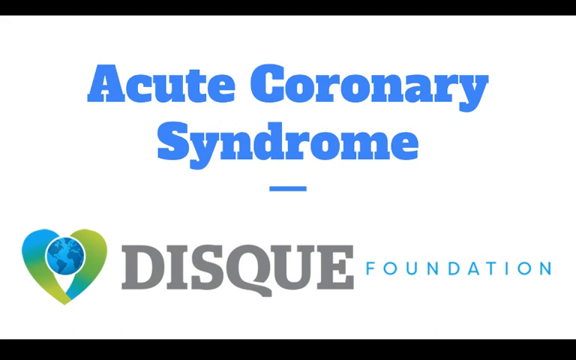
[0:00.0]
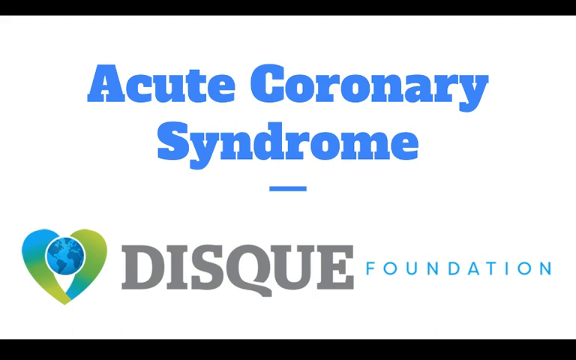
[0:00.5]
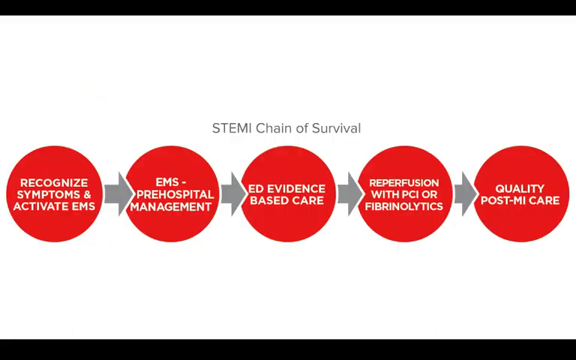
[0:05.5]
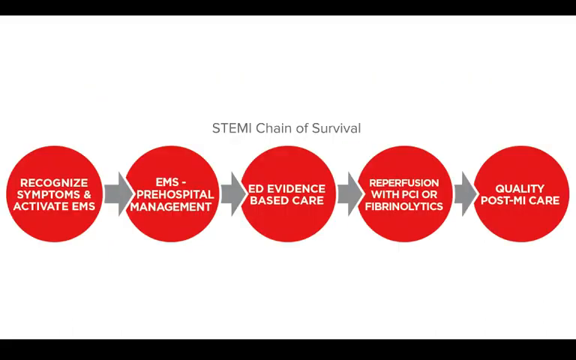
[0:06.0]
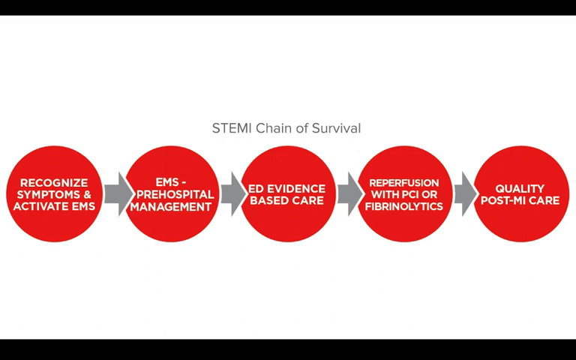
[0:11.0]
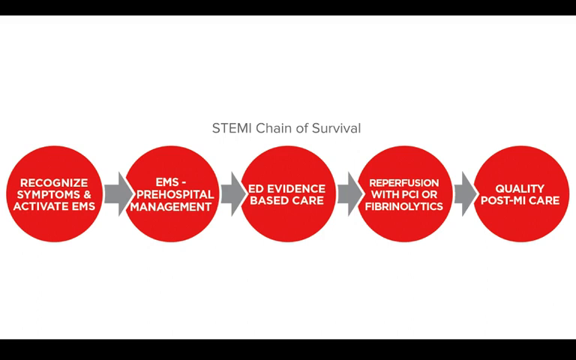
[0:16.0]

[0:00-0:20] The video opens on the title "Acute Coronary Syndrome" in a bright sky blue, centered on the screen, with "acute coronary" on top and "syndrome" below it. A straight horizontal line runs across the very middle of the screen, mainly under the D, the R and the word "syndrome". At the bottom is "DISQUE FOUNDATION" in all caps: "DISQUE" is in very large gray type and "FOUNDATION" is a bit smaller, in a blue that looks very similar to the blue above, maybe a little lighter. To the left of "DISQUE" is a heart icon whose pieces are connected with what looks like an earth at the top; the earth's sea is blue and the continents look dark blue-gray. The heart has the same sky blue on the upper left and lower right, and elsewhere a green that kind of fades into greenish yellow. The heart is enclosed, but its center below the earth, toward the bottom, is open and not colored in. Another screen has the gray title "STEMI chain of survival", with five red dots across the center of the screen connected by four gray arrows. Each dot contains white text: the first, on the left, says "recognize symptoms and activate EMS"; the next says "EMS pre-hospital management"; the one in the middle says "ED evidence-based care"; the fourth says "reperfusion with PCI fibrinolytics"; and the last says "quality post-MI care". The background is white at the top and kind of fades into gray toward the bottom, and this same background is used throughout the whole video.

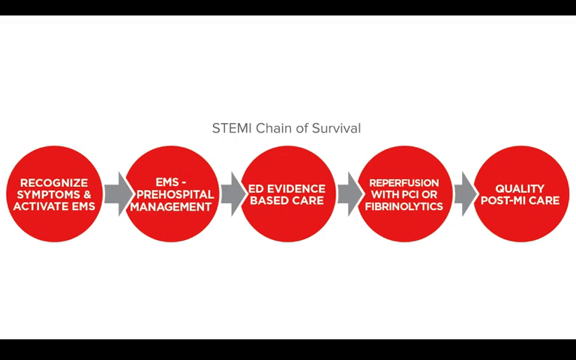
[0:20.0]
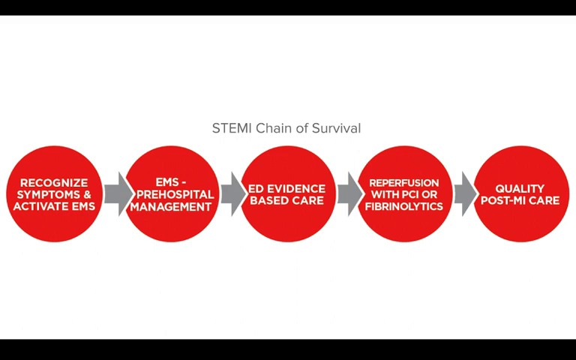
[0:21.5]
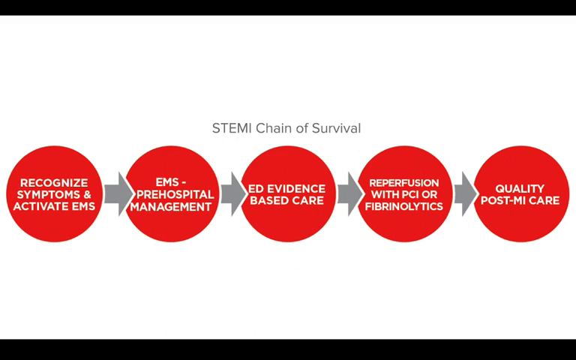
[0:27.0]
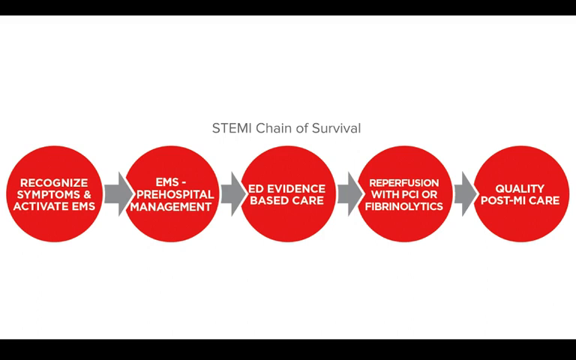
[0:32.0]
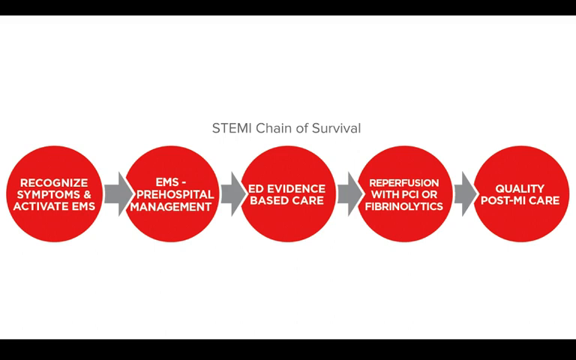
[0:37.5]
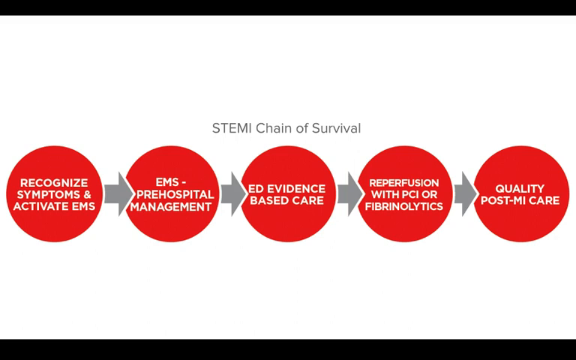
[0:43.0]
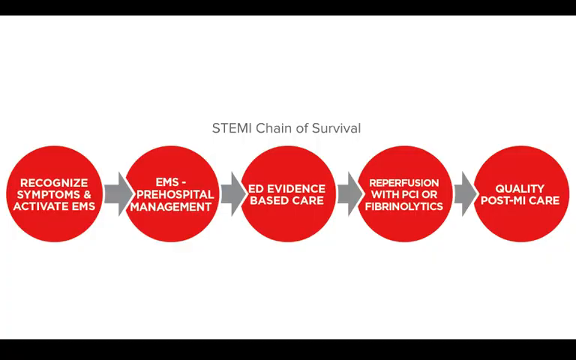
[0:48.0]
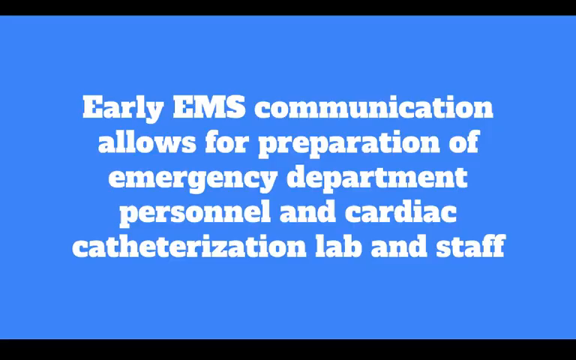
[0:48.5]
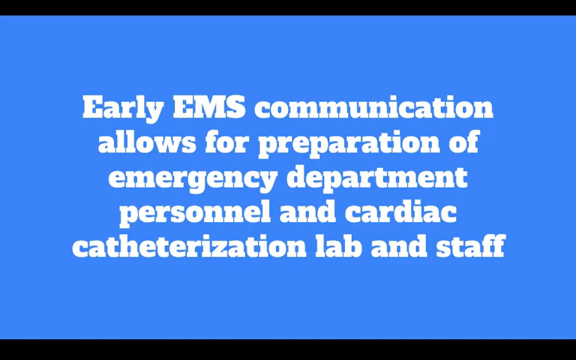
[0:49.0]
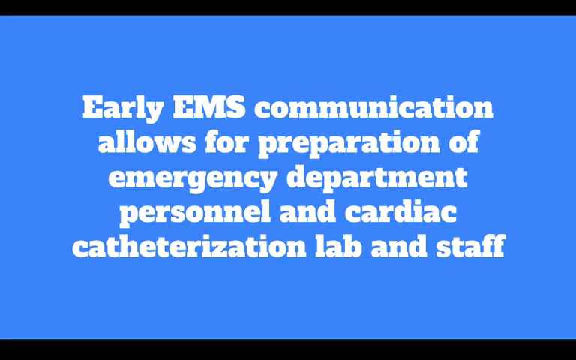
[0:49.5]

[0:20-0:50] The screen has a gradient background, white at the top fading into dark gray at the bottom, with most of it white. Centered in the upper middle is the title "STEMI chain of survival" in gray, with "STEMI" in all caps. Five red dots run horizontally across the center of the screen, each containing white all-caps text, and four gray arrows show the progression from the first dot to the last. The first dot, on the left, says "recognize symptoms and activate EMS"; the second says "EMS pre-hospital management"; the third, centered on the screen, says "ED evidence-based care"; the fourth says "reperfusion with PCI or fibrinolytics"; and the fifth says "quality post-MI care".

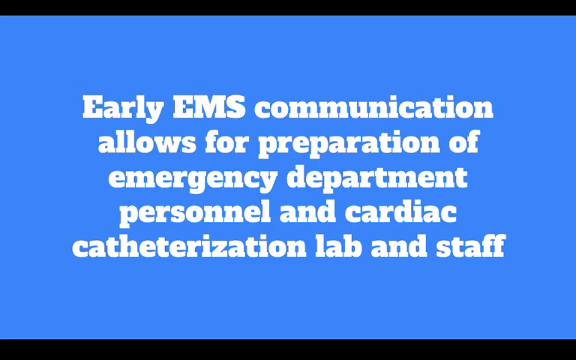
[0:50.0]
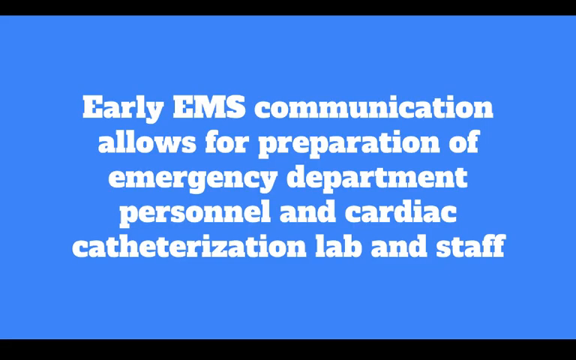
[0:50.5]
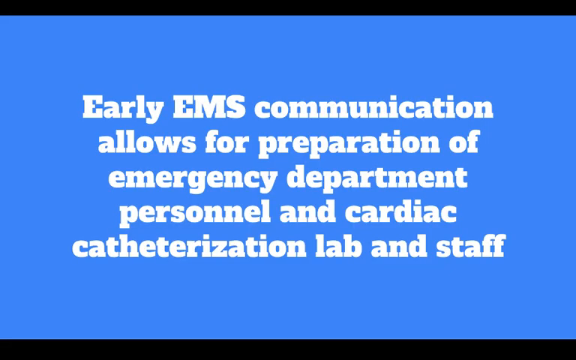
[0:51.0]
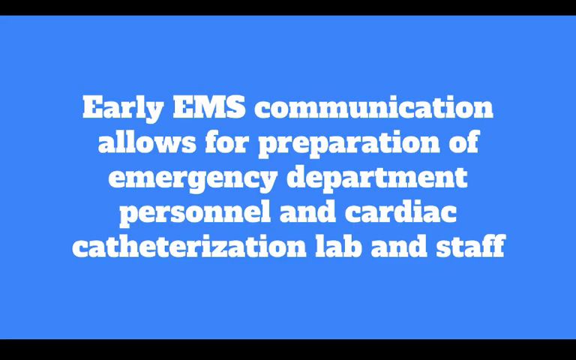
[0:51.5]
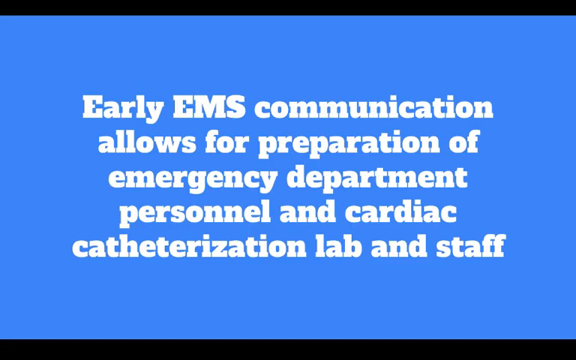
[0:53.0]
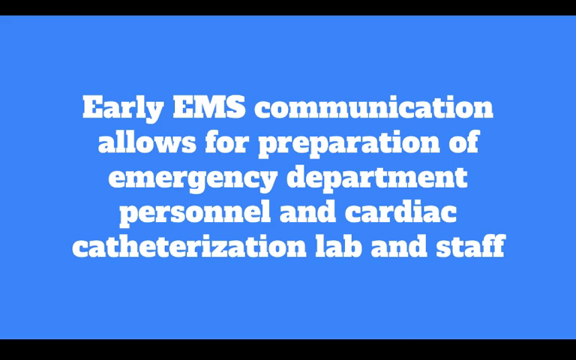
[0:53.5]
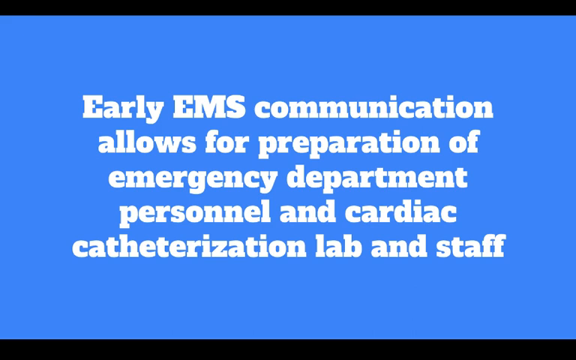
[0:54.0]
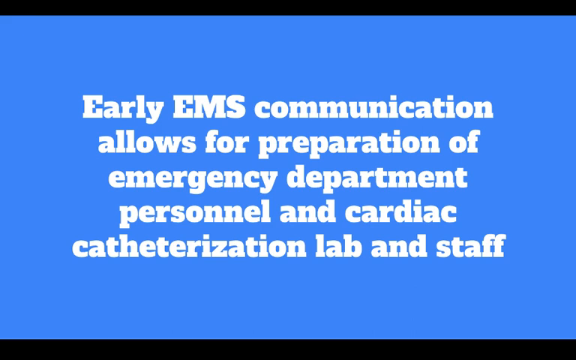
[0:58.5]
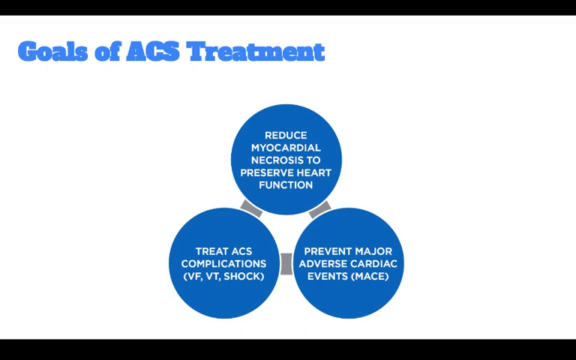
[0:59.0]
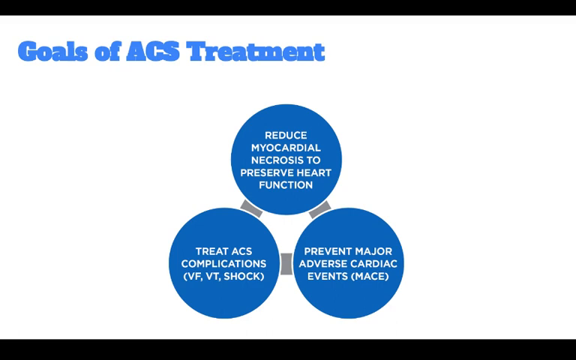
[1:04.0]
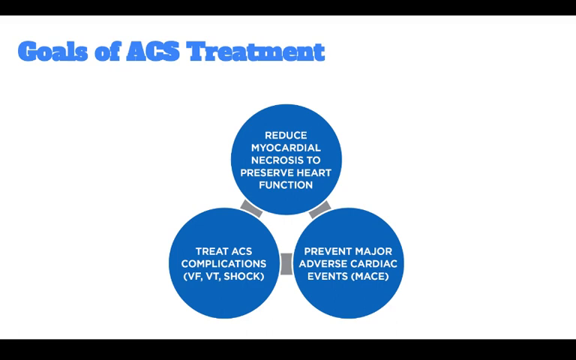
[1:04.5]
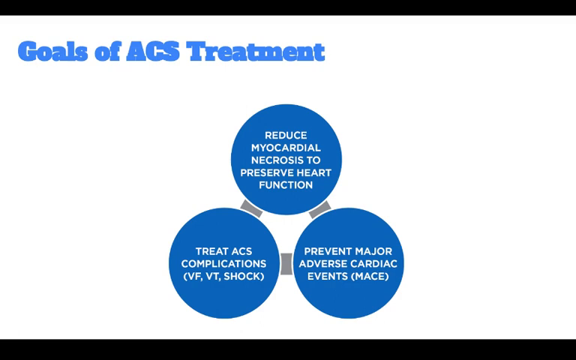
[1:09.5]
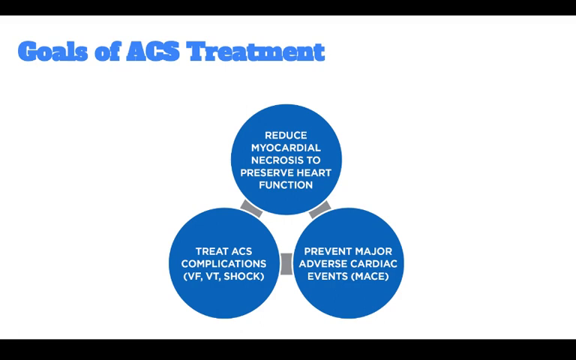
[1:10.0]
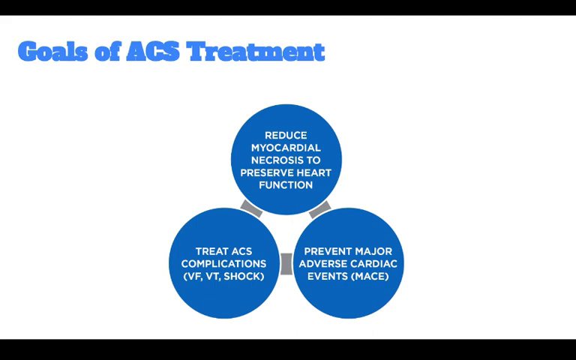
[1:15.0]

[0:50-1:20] Two screens appear. The first has a gradient background that is sky blue at the top and fades into black toward the bottom, with large white words centered on the screen: "early EMS communication allows for preparation of emergency department personnel and cardiac catheterization lab and staff". This leads into a screen with a white background and a left-aligned sky blue title at the top left reading "Goals of ACS Treatment", with "ACS" in all caps. In the center is a three-step diagram, possibly a flow chart: three large blue dots connected by straight gray lines, forming what looks like a triangle with a dot at each vertex. Each dot contains white all-caps text. The top circle says "reduce myocardial necrosis to preserve heart function", which flows to the bottom right vertex, "prevent major adverse cardiac events (MACE)", then to the bottom left vertex, "treat ACS complications (VF, VT, shock)", which flows back into the top circle. The background is mostly white and fades into a very dark gray at the bottom.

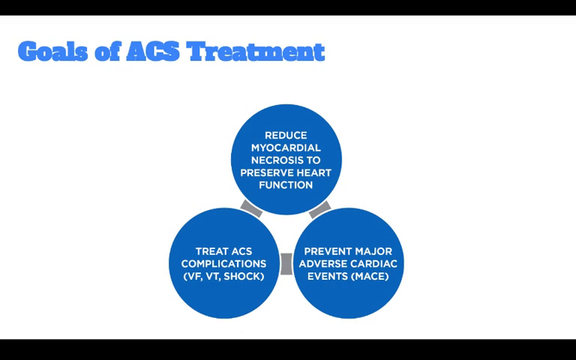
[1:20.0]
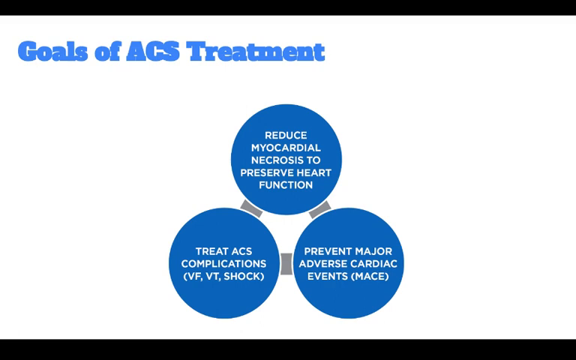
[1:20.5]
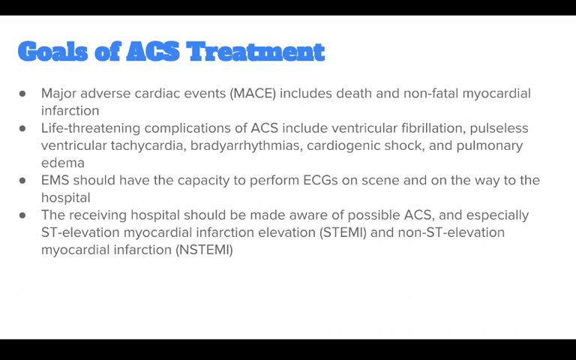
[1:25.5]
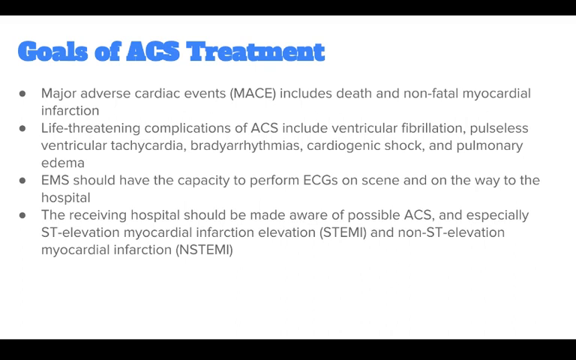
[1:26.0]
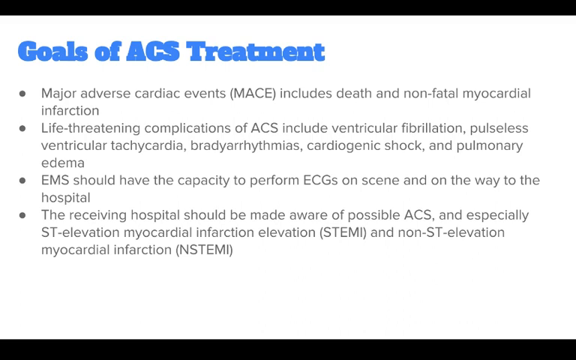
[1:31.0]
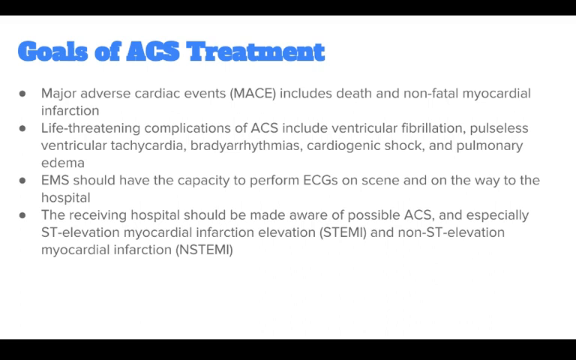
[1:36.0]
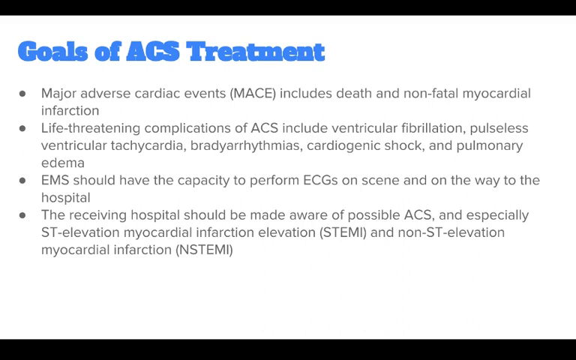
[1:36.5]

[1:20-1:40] The triangle diagram is shown, and within five seconds it transitions to the next screen, whose gradient background is mostly white and flows into dark gray or black at the bottom. The left-aligned title in the upper left, in sky blue, reads "Goals of ACS Treatment". Below it are four bullets, all in gray type. The first says "major adverse cardiac events (MACE) includes death and nonfatal myocardial infarction". The second says "life-threatening complications of ACS include ventricular fibrillation, pulseless ventricular tachycardia, bradyarrhythmias, cardiogenic shock, and pulmonary edema". The third says "EMS should have the capacity to perform ECGs on scene and on the way to the hospital". The last says "the receiving hospital should be made aware of possible ACS and especially ST elevation, myocardial infarction elevation (STEMI) and non-ST elevation myocardial infarction (NSTEMI)".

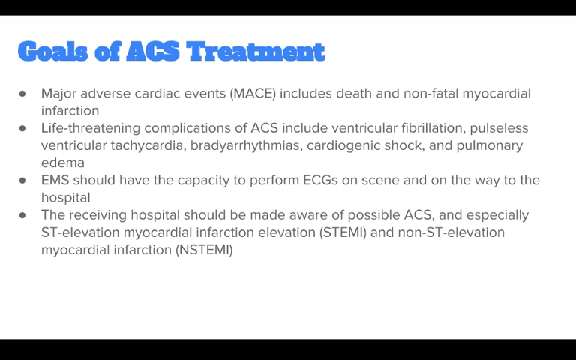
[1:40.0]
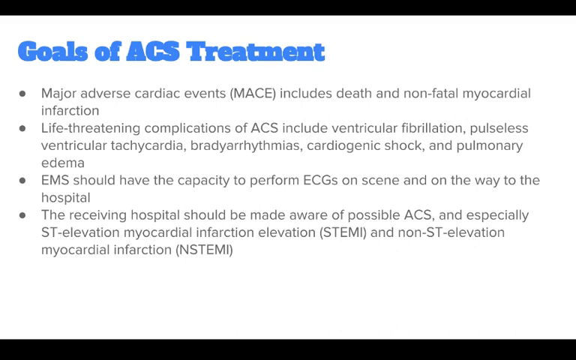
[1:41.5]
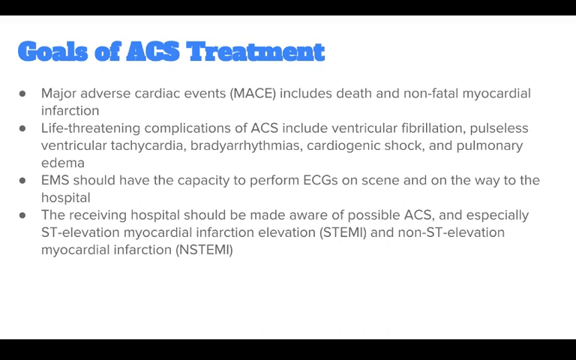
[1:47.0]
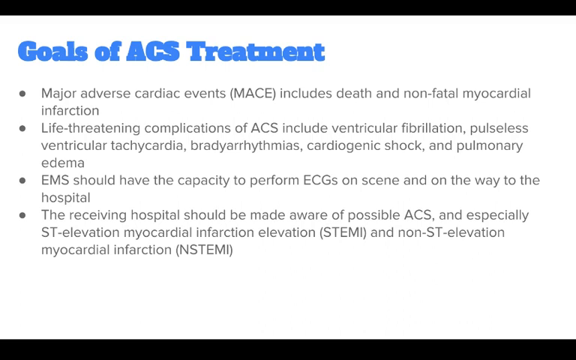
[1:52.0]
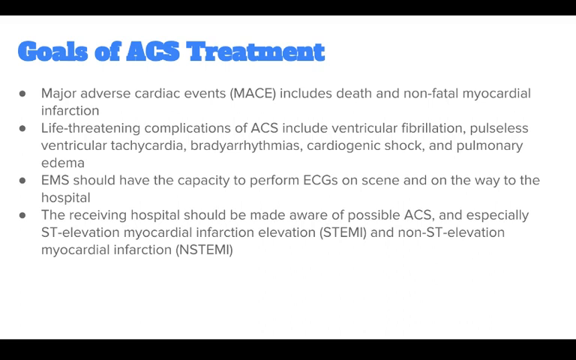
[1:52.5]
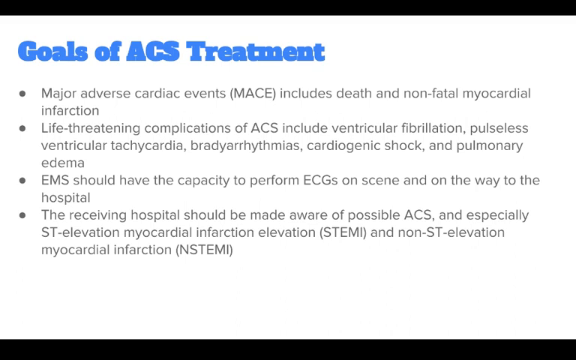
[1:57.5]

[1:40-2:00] The bulleted screen continues, with a gradient background that is mostly white and flows into black at the bottom. The left-aligned title in the upper left, in the sky blue color used throughout the video, says "goals of ACS treatment". Below it are four left-aligned bullets in gray font. The first says "major adverse cardiac events (MACE) and includes death and nonfatal myocardial infarction". The second states "life-threatening complications of ACS include ventricular fibrillation, pulseless ventricular tachycardia, bradyarrhythmias, cardiogenic shock, and pulmonary edema". The third states "EMS should have the capacity to perform ECGs on scene and on the way to the hospital". The final bullet states "the receiving hospital should be made aware of possible ACS and especially ST elevation, myocardial infarction elevation (STEMI), and non-ST elevation myocardial infarction (NSTEMI)".